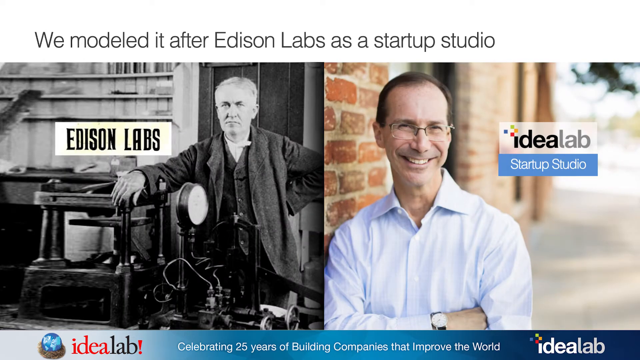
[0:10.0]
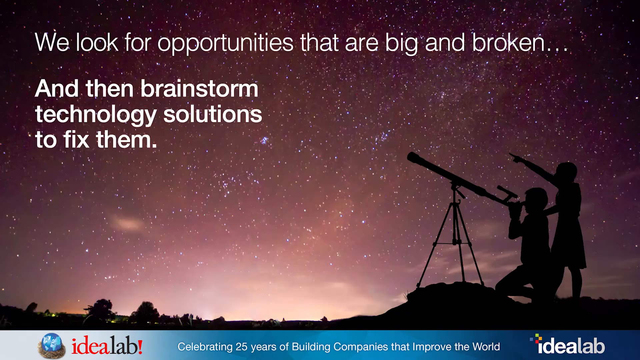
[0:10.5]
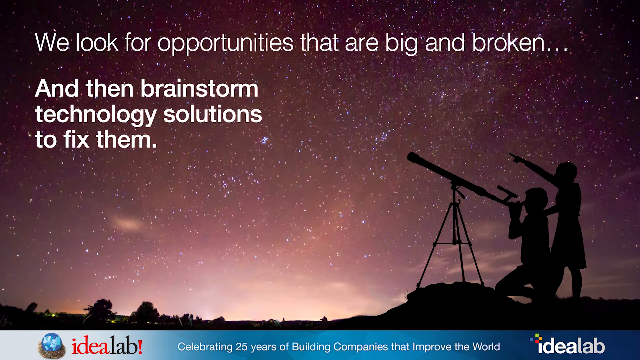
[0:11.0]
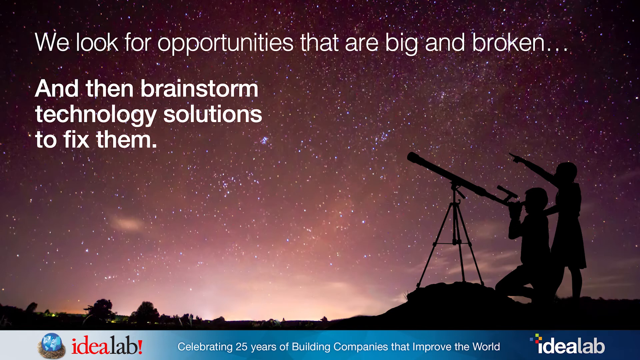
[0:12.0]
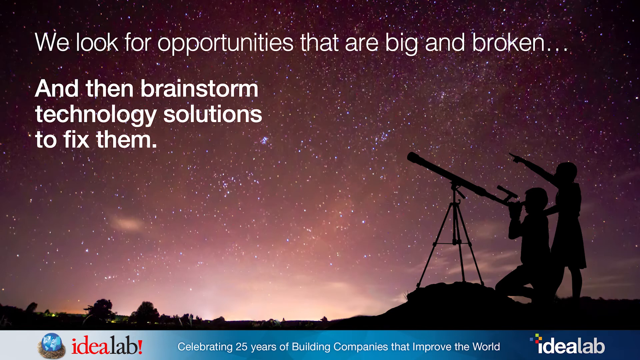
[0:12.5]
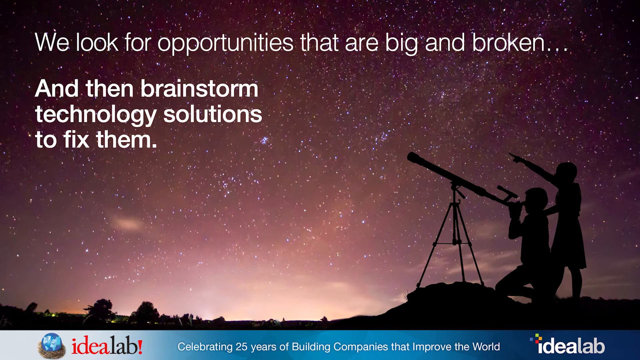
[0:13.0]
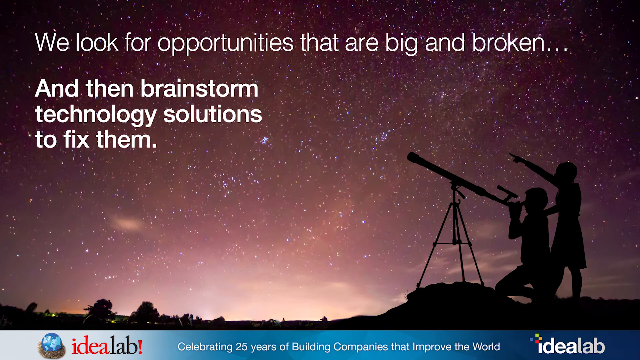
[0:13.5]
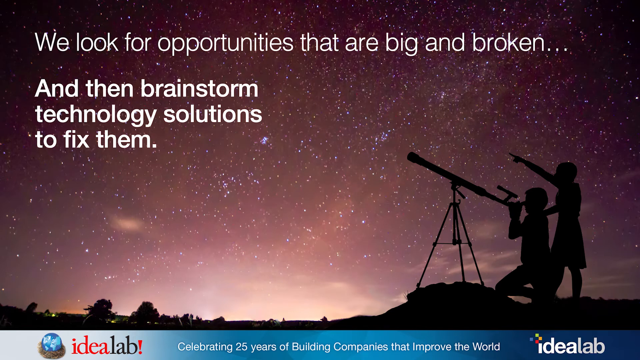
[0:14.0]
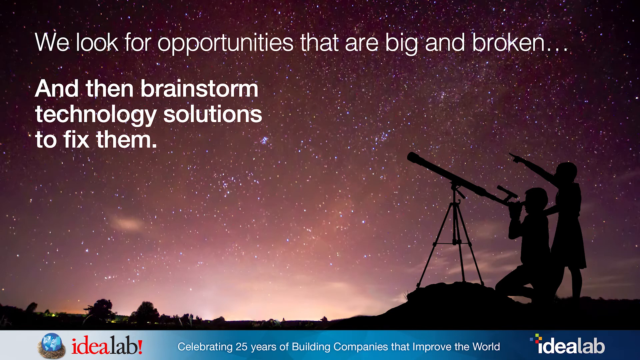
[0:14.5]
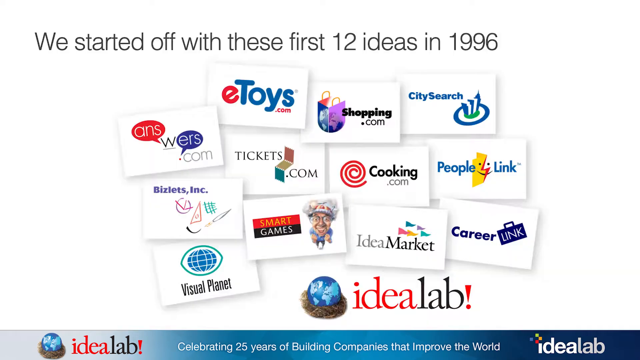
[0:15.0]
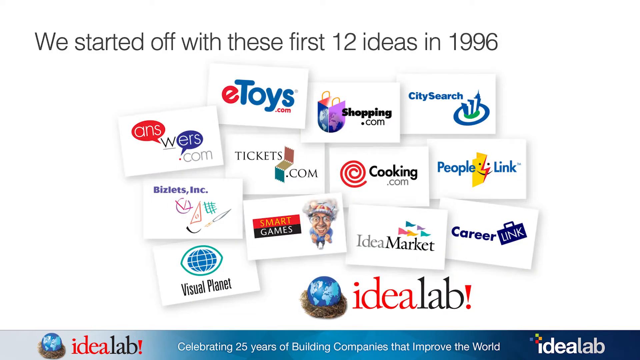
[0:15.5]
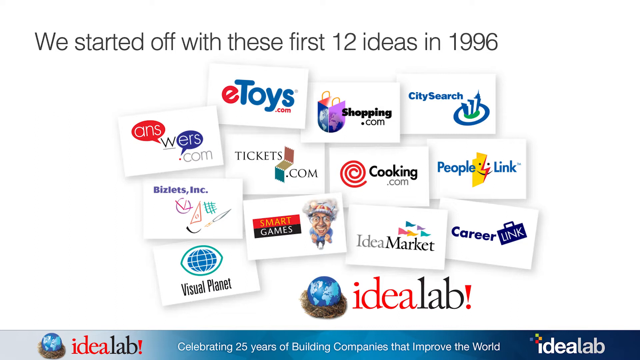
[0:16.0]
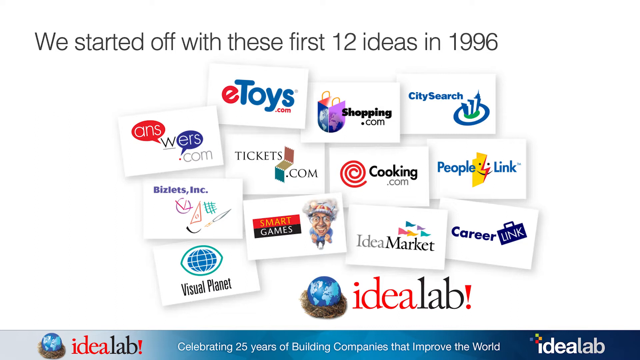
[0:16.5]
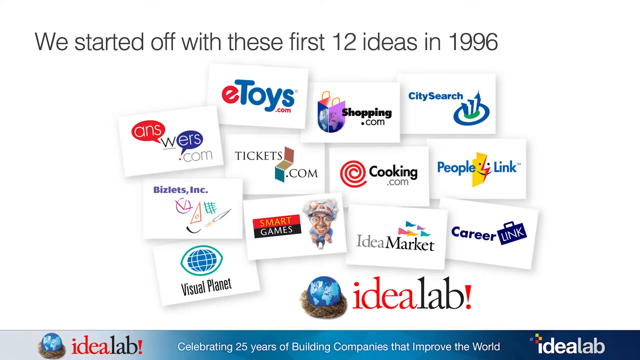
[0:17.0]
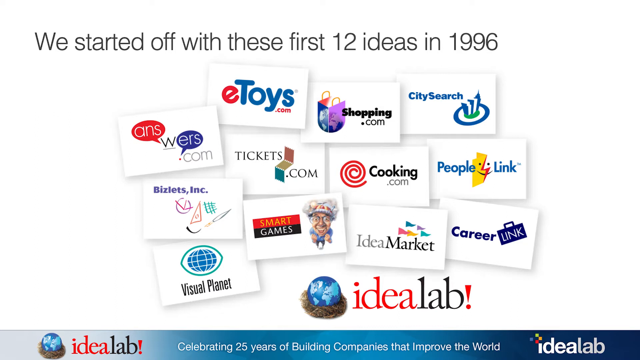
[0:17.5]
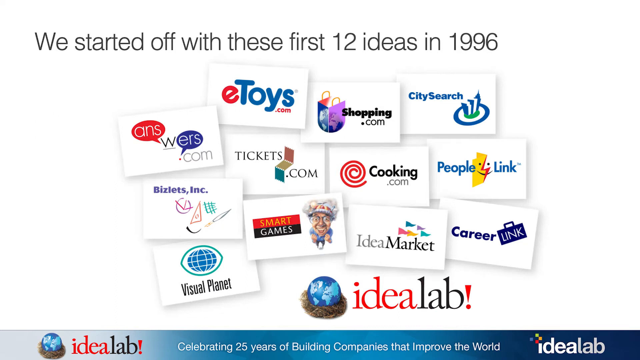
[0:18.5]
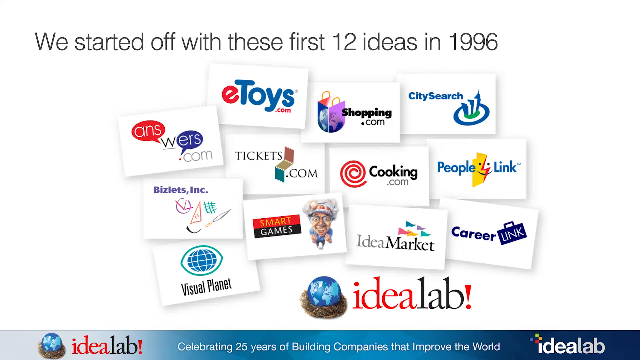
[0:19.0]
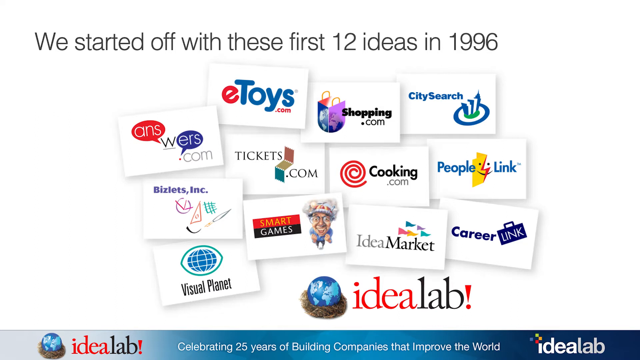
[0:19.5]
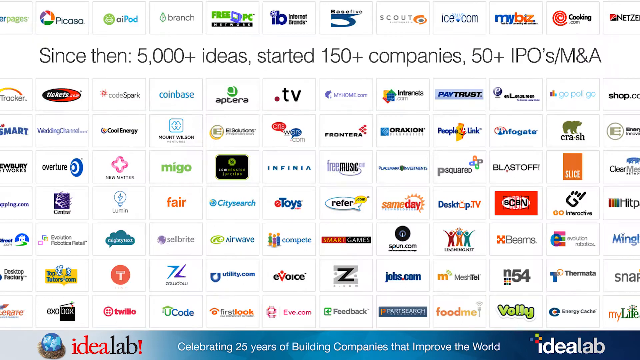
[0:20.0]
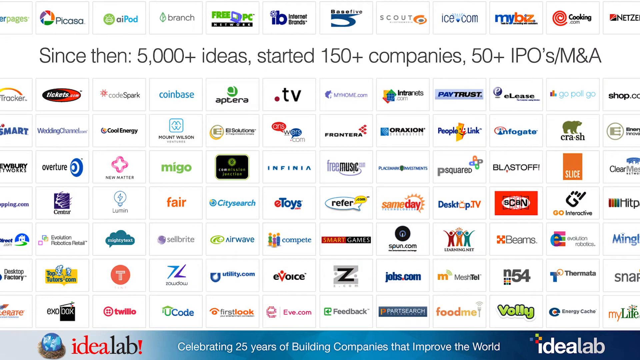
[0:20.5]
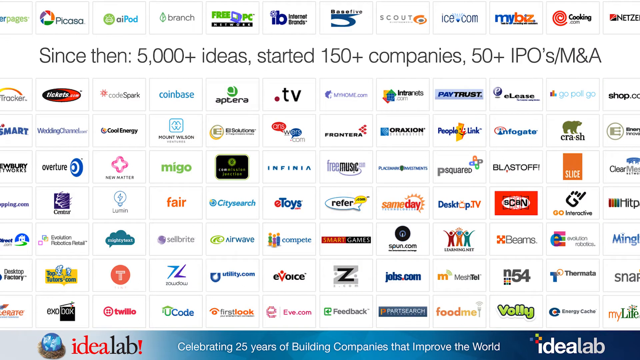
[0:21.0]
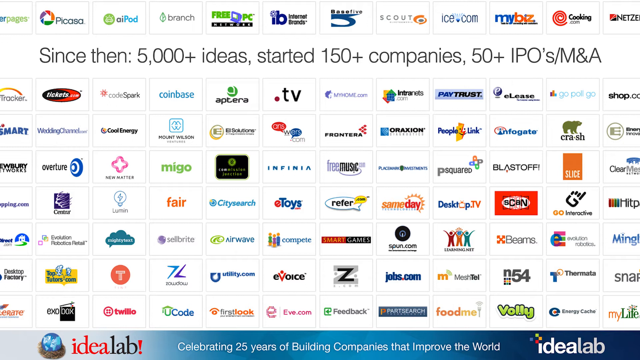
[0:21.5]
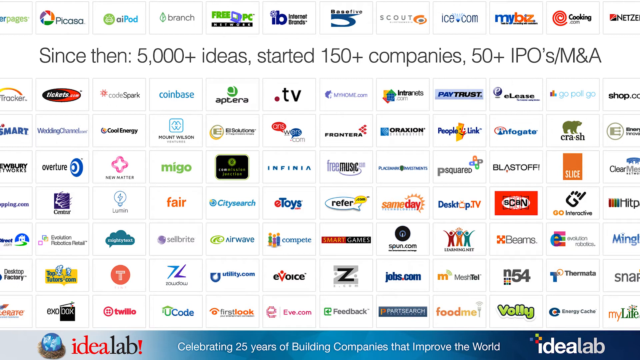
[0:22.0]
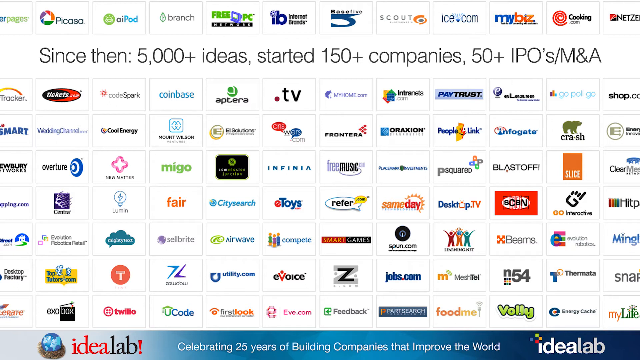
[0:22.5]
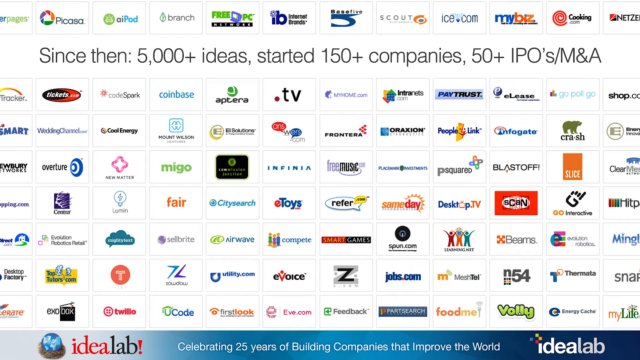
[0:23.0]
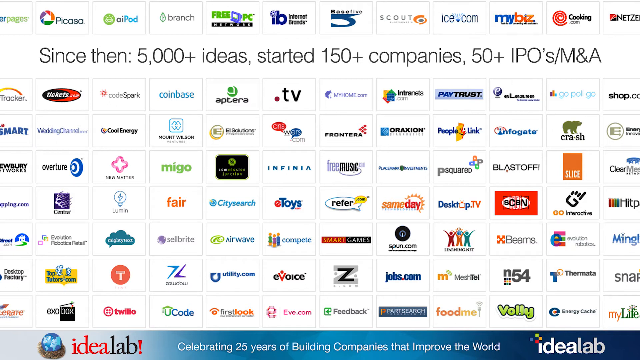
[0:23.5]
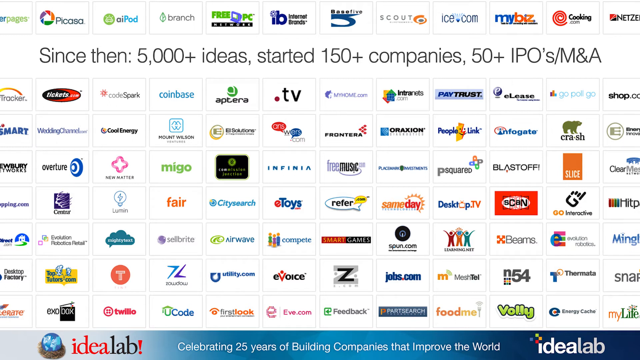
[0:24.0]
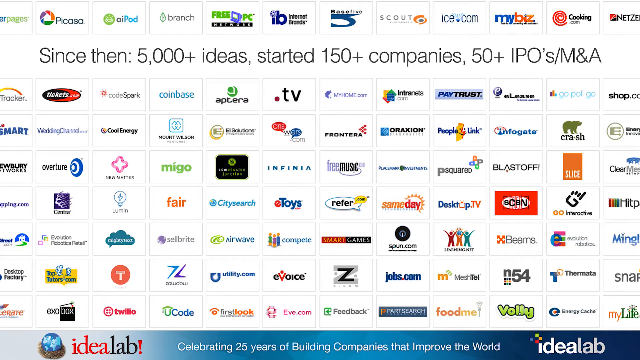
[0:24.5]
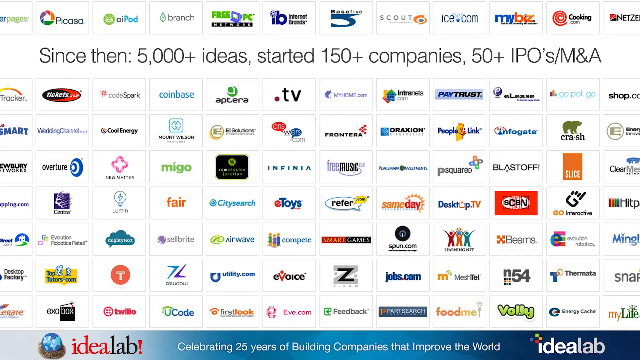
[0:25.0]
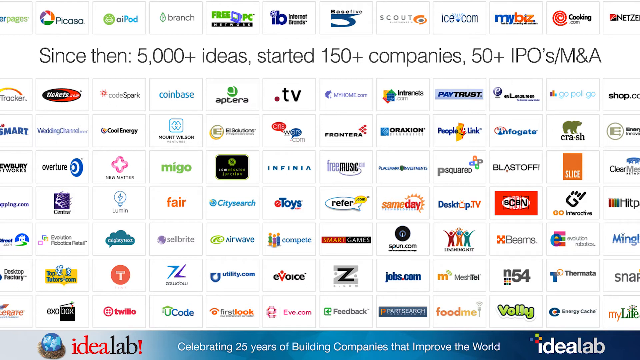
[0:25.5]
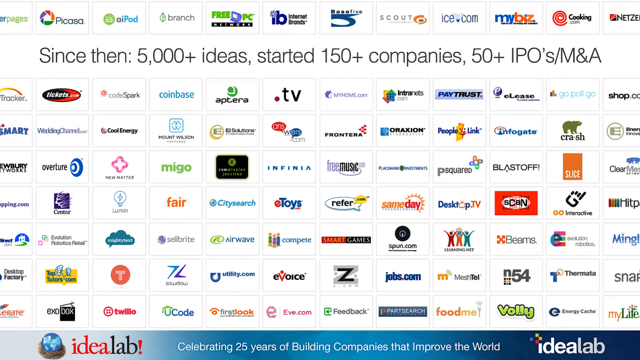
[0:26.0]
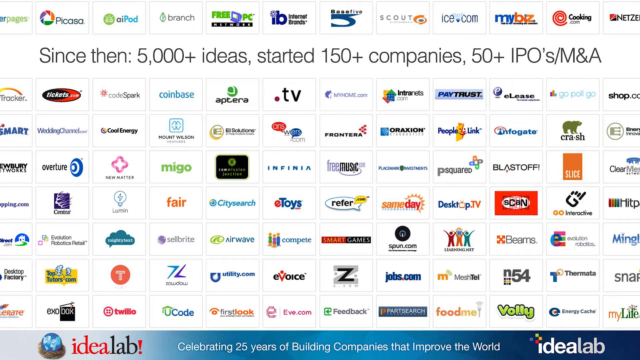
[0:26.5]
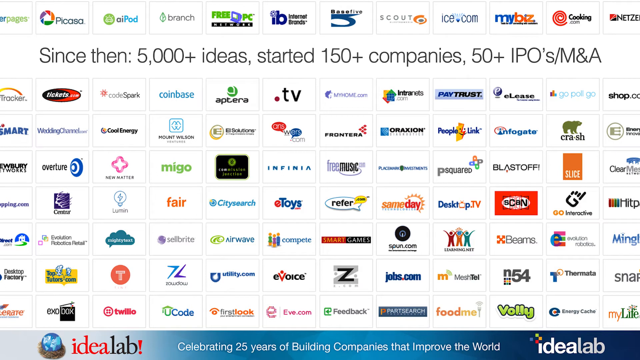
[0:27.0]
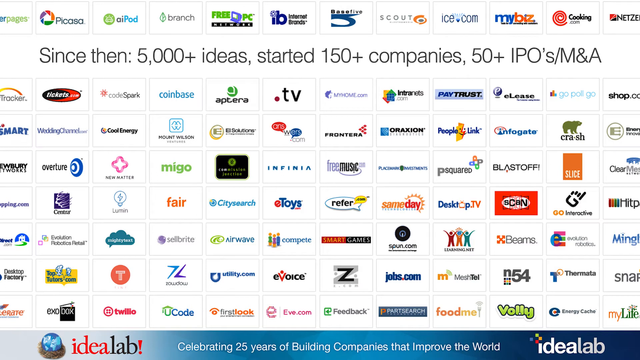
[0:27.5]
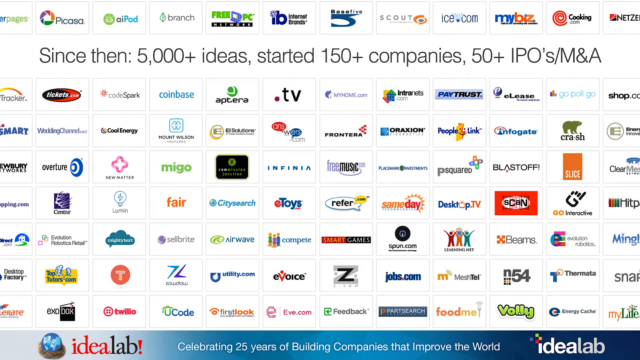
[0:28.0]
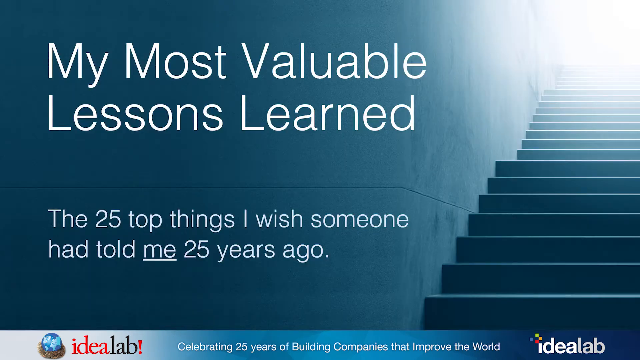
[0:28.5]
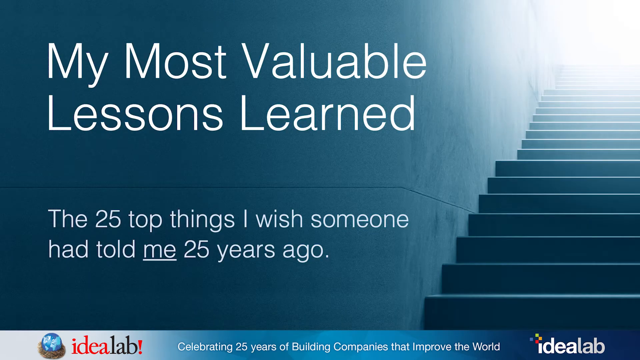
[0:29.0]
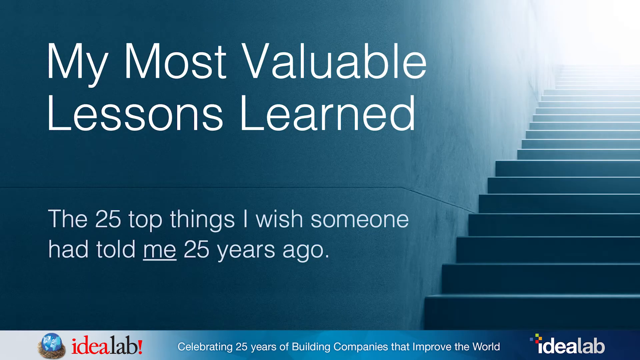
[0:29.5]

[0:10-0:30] Text at the top reads "we modeled it after Edison Labs as a startup studio." On the left is a black and white picture of an older gentleman labeled "Edison Labs." On the right is the same man shown earlier, wearing glasses, a blue and white dress shirt and a watch, with brown hair; he is standing outside the Idealab Startup Studio, with the Idealab Startup Studio logo next to him. The video then cuts to a title reading "we look for opportunities that are big and broken... and then brainstorm technology solutions to fix them." An image shows the silhouettes of two individuals, one kneeling and looking through a telescope and the other pointing, against a purple sky with what looks like several stars. The video then cuts to "we started off with these first 12 ideas in 1996," and various company logos are shown, one of them eToys.